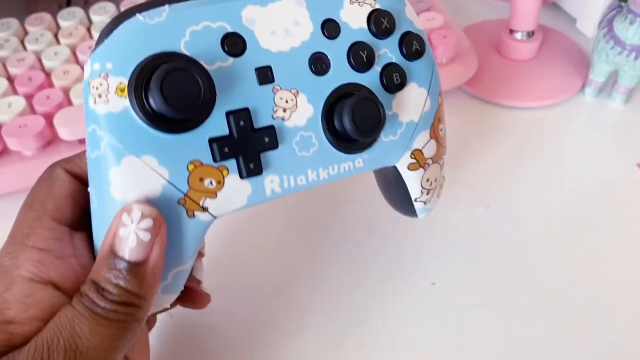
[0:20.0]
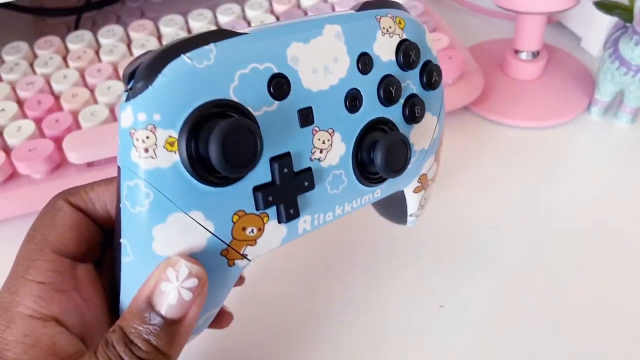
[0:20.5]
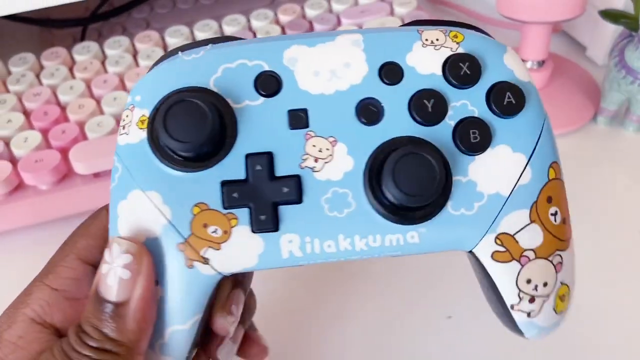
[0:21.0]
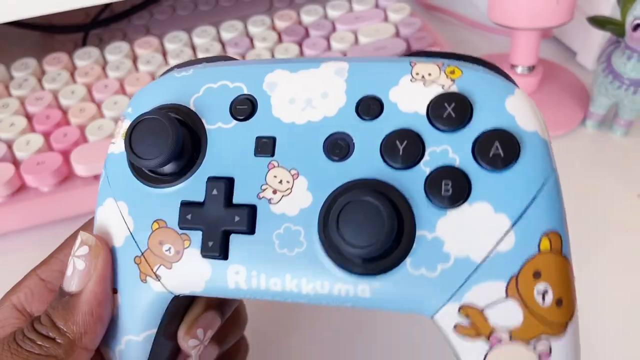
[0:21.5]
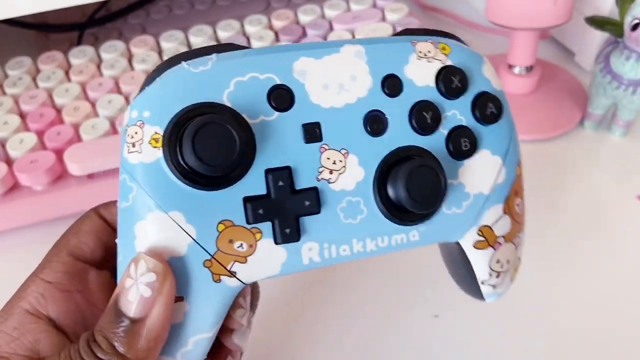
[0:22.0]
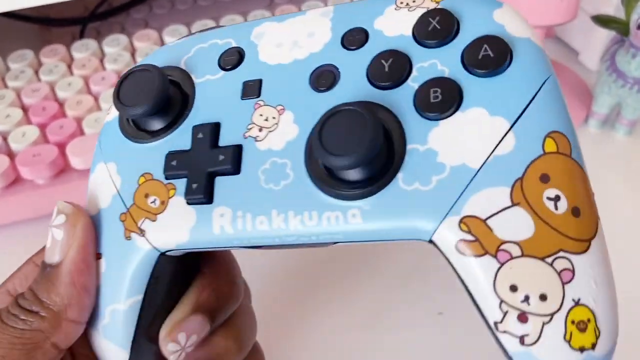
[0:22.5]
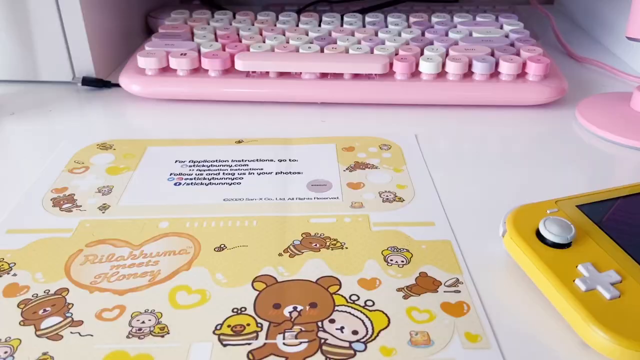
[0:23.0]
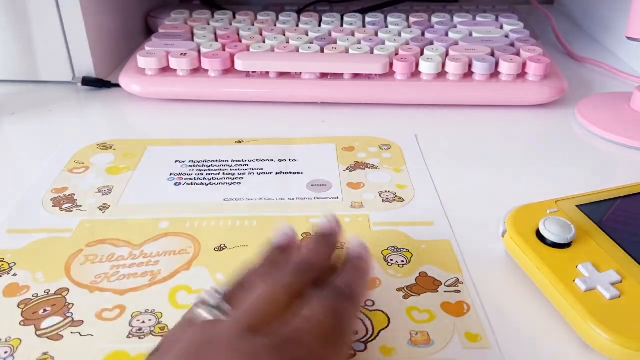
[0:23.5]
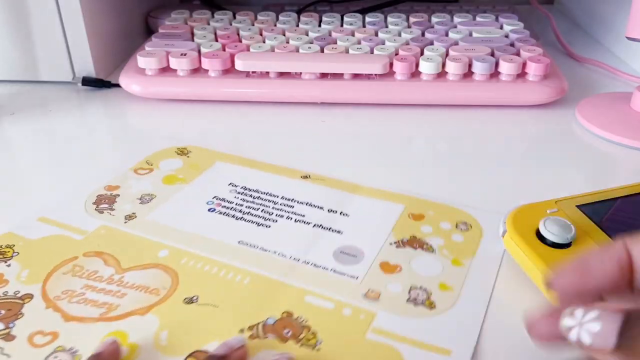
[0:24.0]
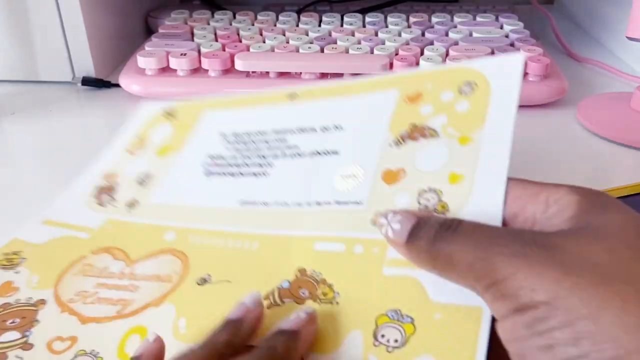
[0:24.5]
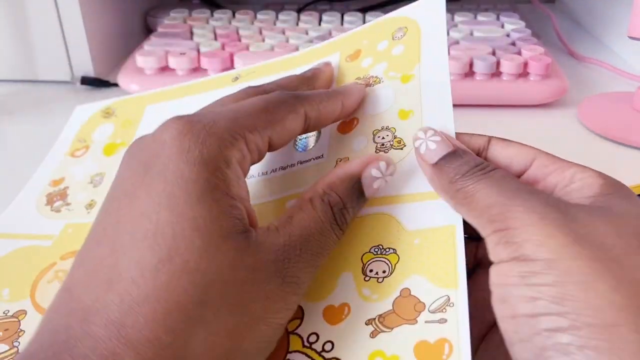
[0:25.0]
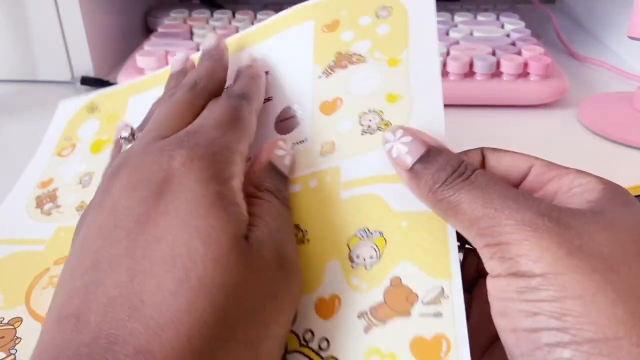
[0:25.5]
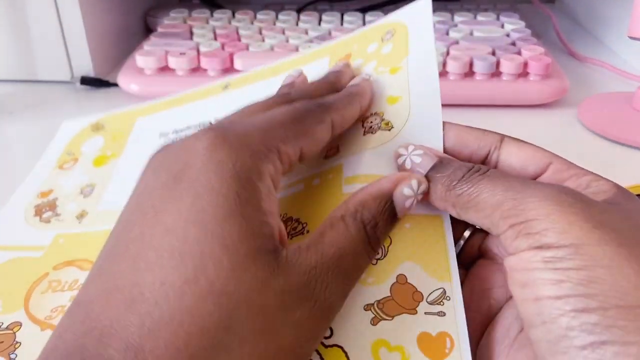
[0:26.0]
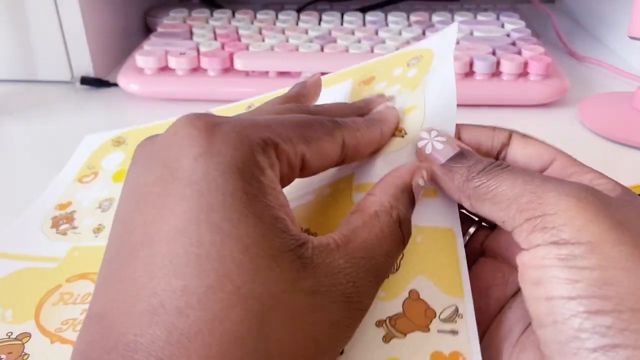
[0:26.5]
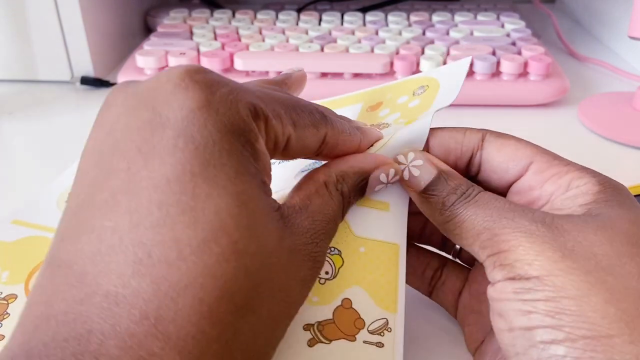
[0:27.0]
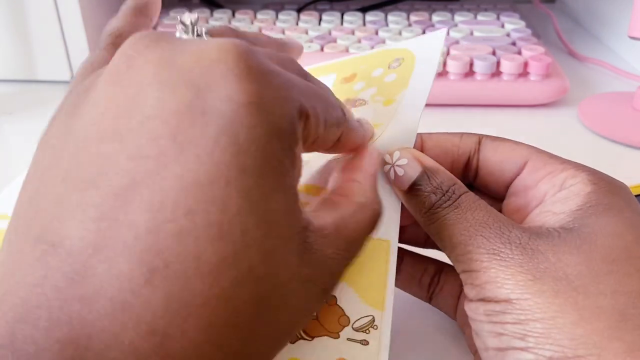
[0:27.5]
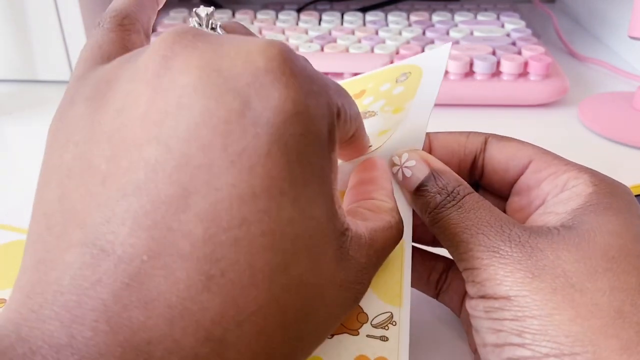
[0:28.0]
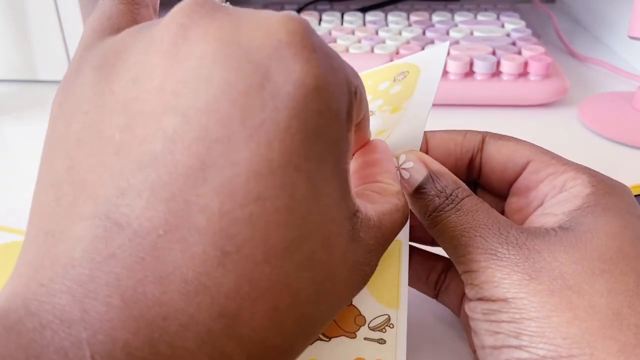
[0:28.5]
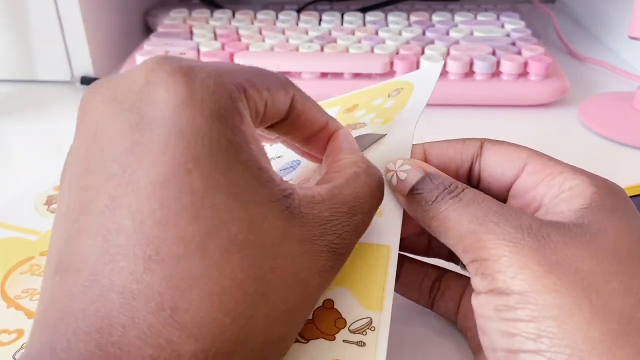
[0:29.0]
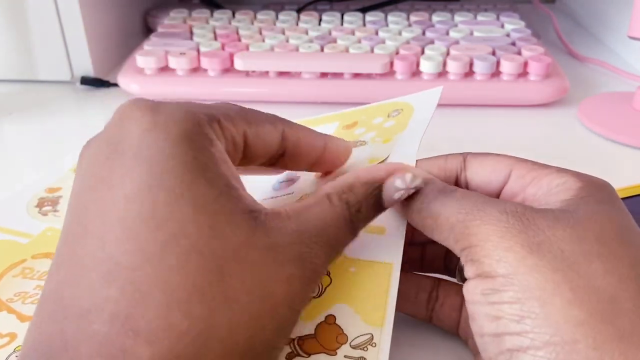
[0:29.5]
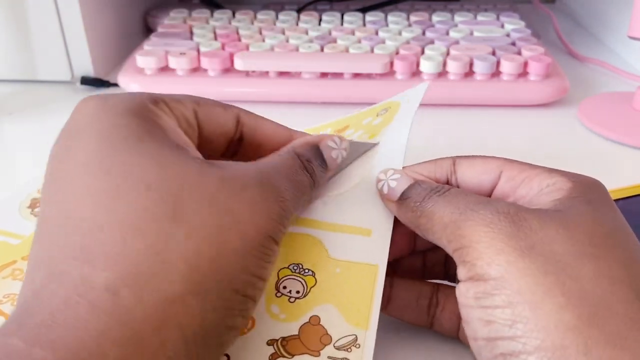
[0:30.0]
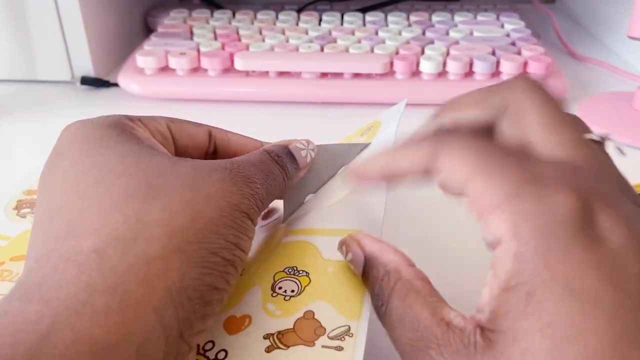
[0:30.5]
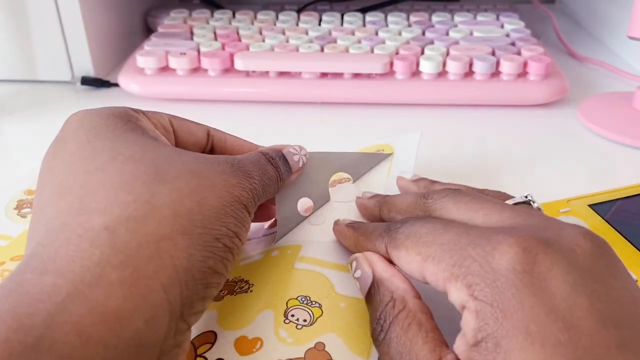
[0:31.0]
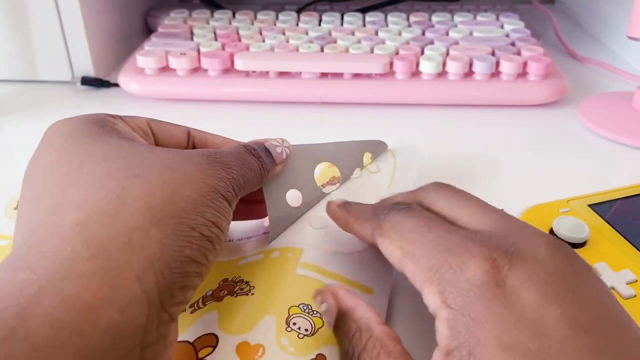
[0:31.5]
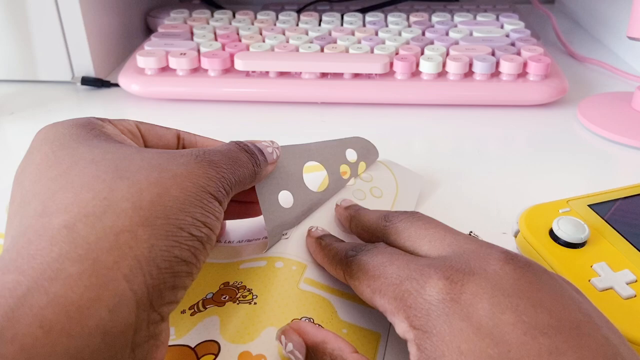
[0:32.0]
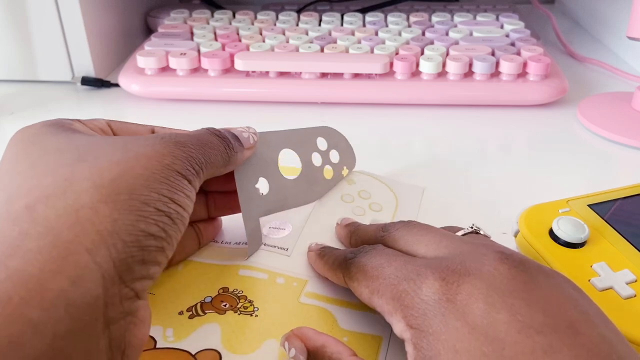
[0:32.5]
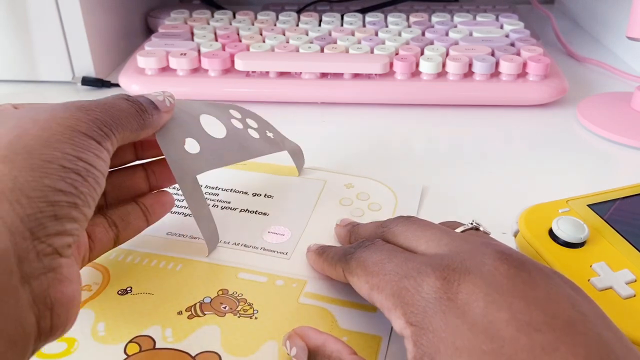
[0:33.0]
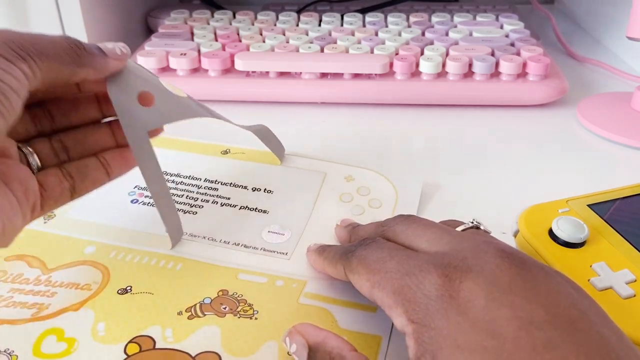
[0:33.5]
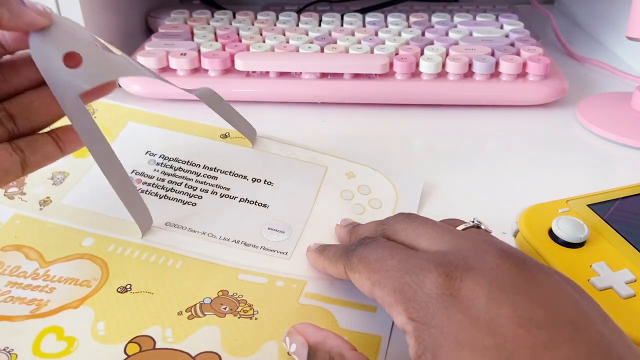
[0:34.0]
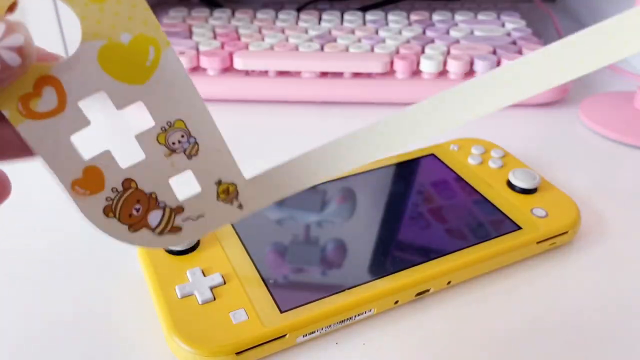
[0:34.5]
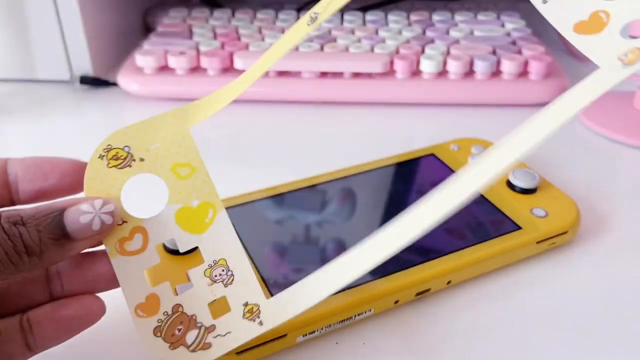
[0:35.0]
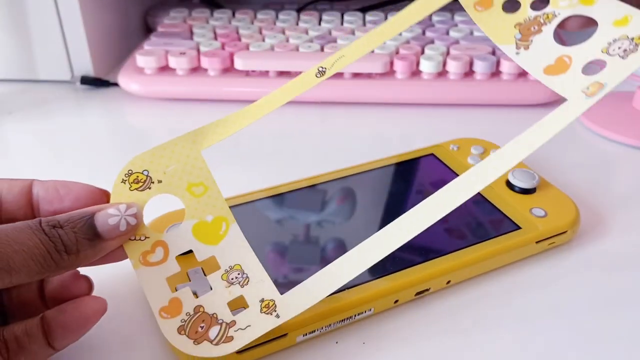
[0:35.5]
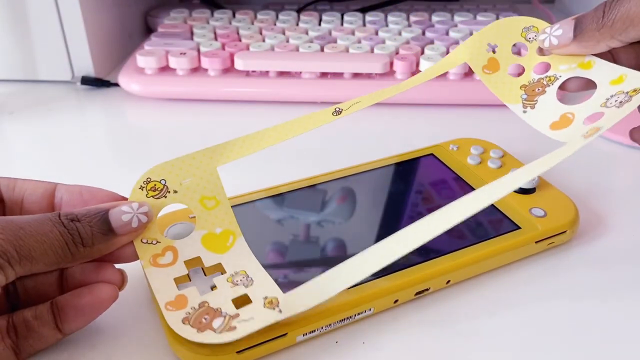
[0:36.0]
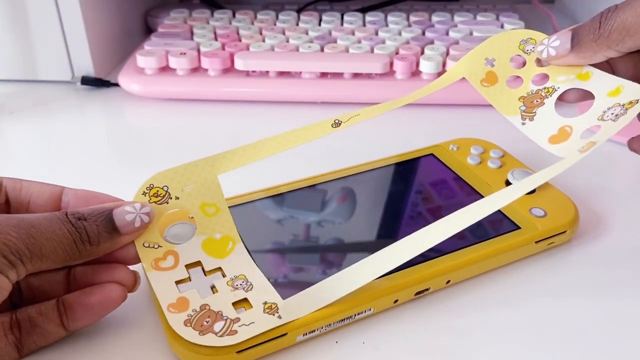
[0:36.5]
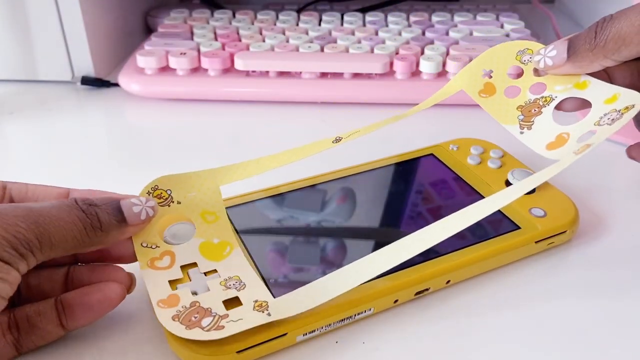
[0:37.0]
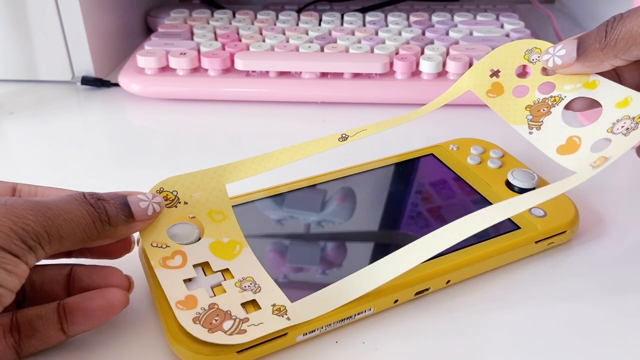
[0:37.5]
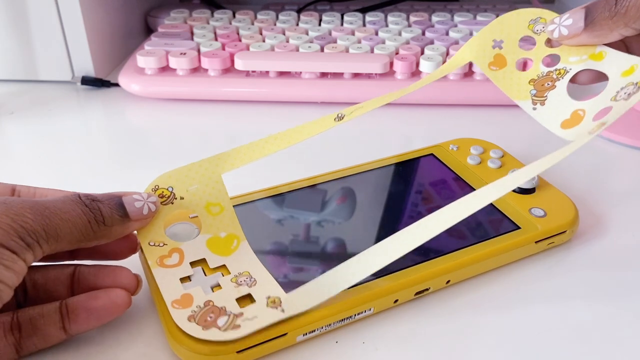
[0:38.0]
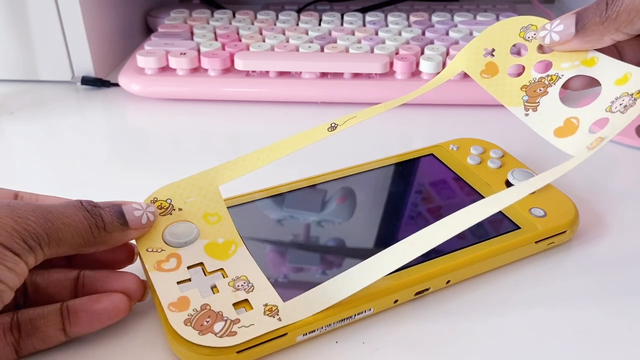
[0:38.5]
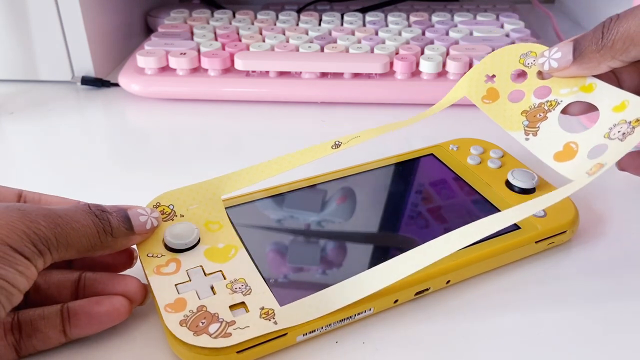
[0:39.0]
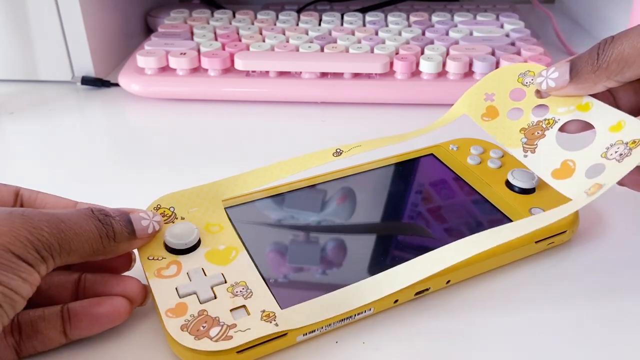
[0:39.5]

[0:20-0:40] A blue and white joypad is positioned in the center of the frame, held by a hand visible in the lower left corner. The thumb of this hand bears an illustration of a white flower. Besides white writing, the joypad has images of white clouds and some white and brown bears. Then two hands handle a sheet of paper with colored stickers on it; the person quickly removes the stickers and places them on top of a yellow console. The console is on a white floor and has a screen, a rather large and very shiny monitor. In the background at the top of the frame there is a white, pink and purple keyboard with rounded corners.